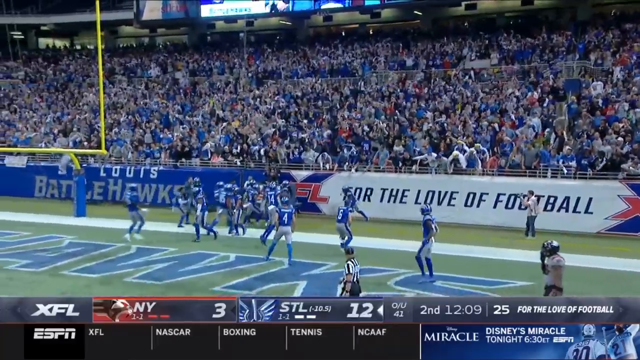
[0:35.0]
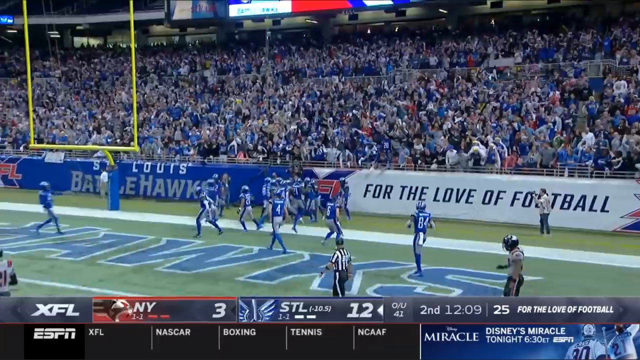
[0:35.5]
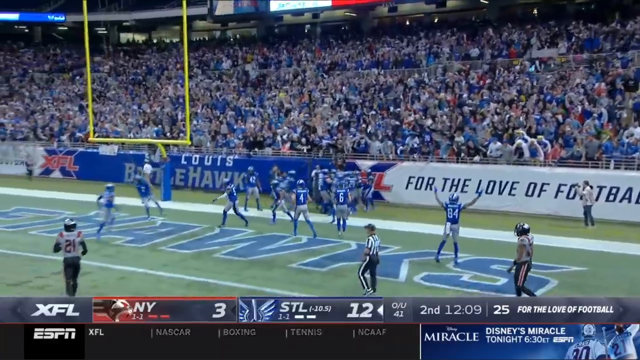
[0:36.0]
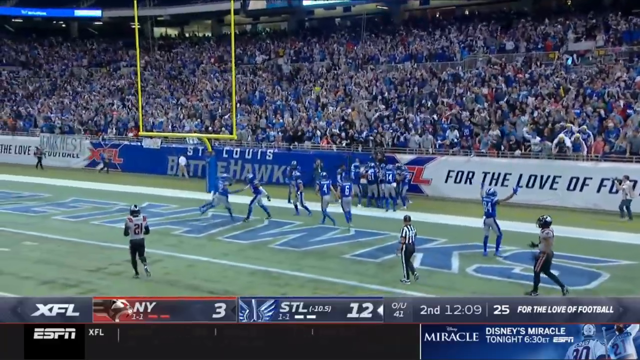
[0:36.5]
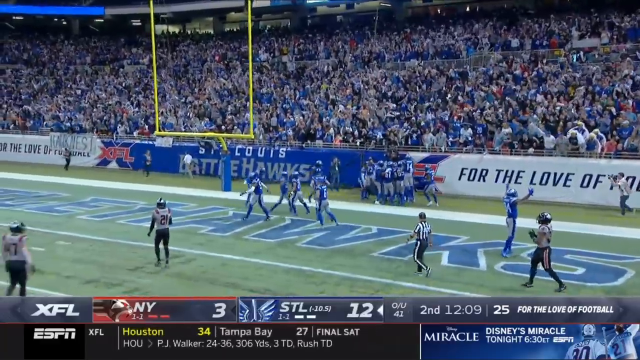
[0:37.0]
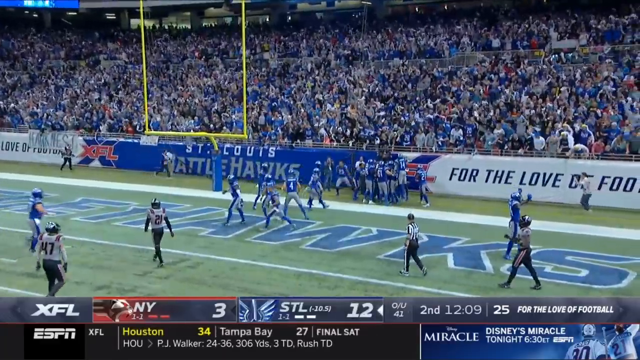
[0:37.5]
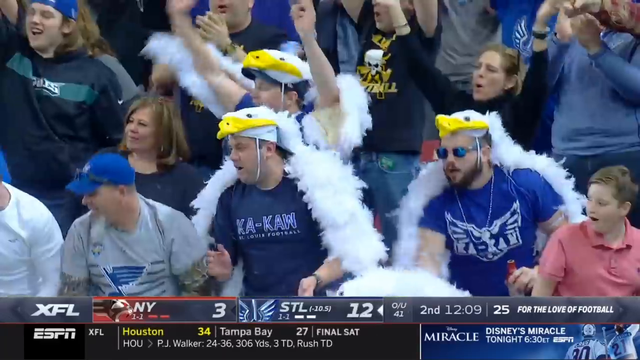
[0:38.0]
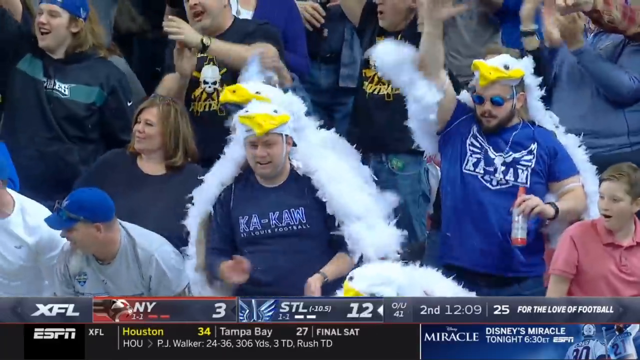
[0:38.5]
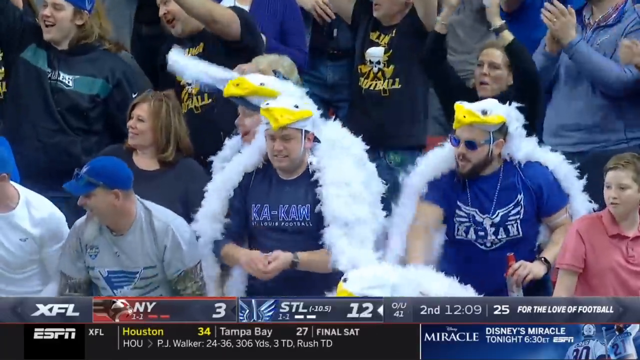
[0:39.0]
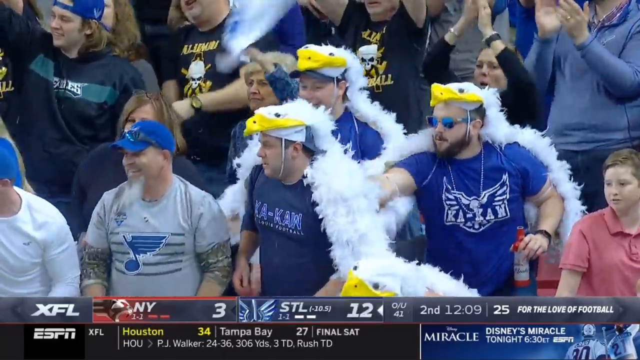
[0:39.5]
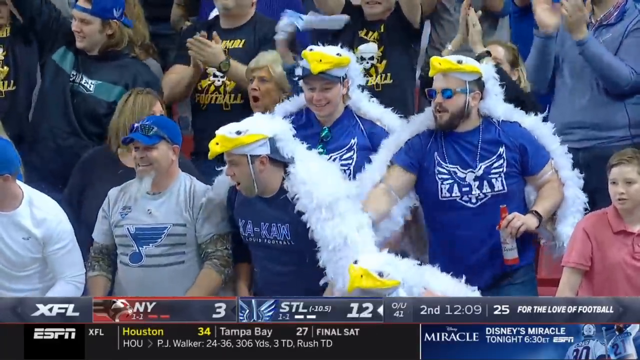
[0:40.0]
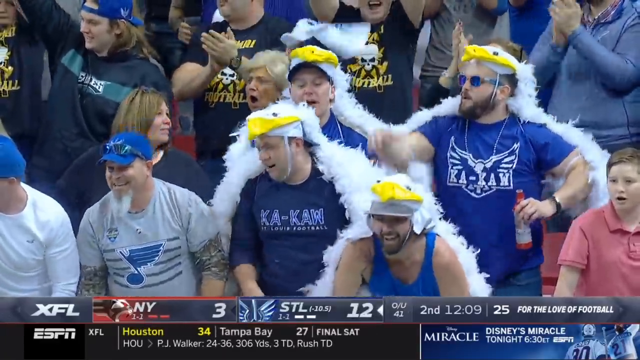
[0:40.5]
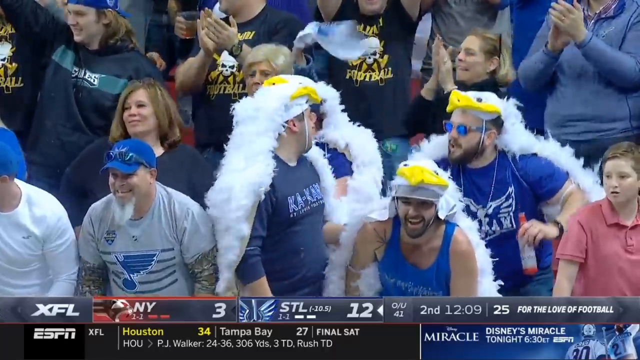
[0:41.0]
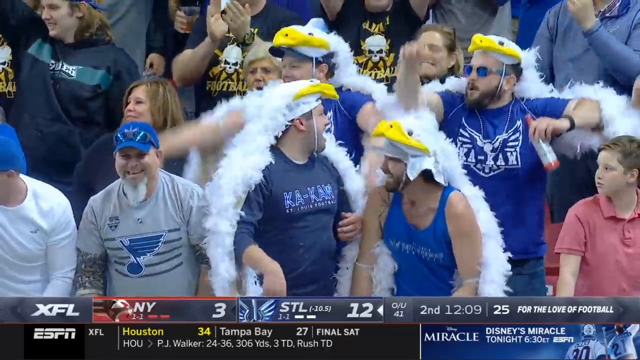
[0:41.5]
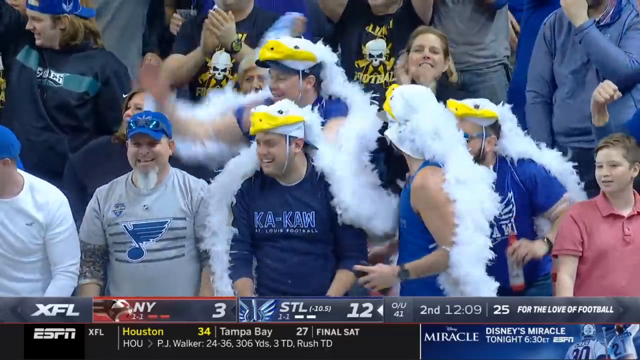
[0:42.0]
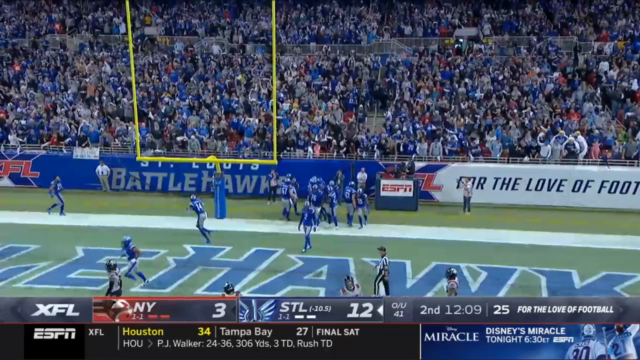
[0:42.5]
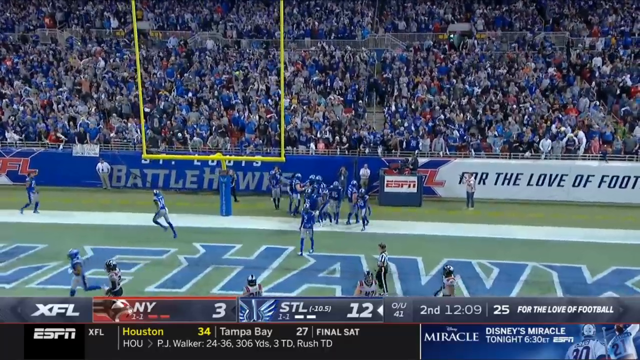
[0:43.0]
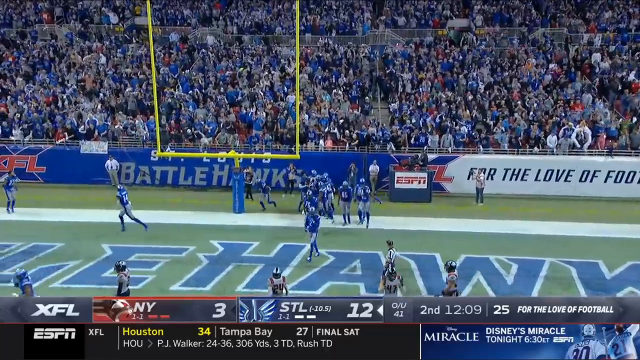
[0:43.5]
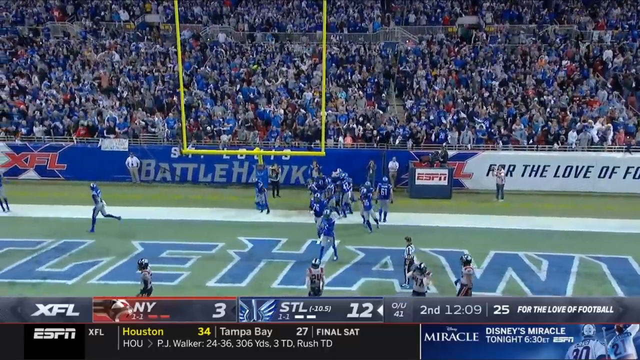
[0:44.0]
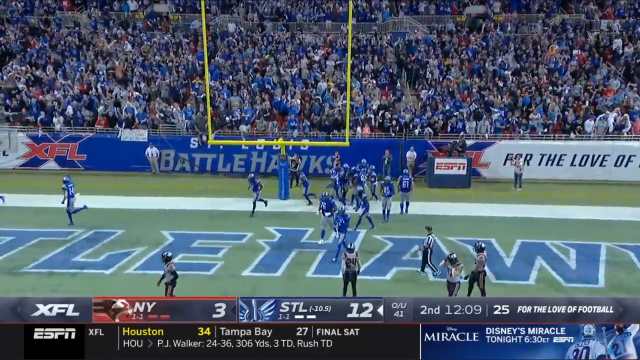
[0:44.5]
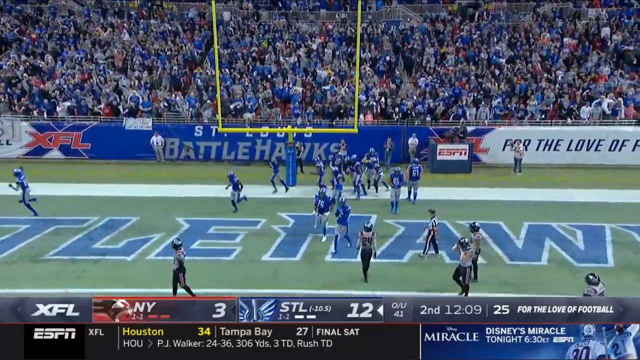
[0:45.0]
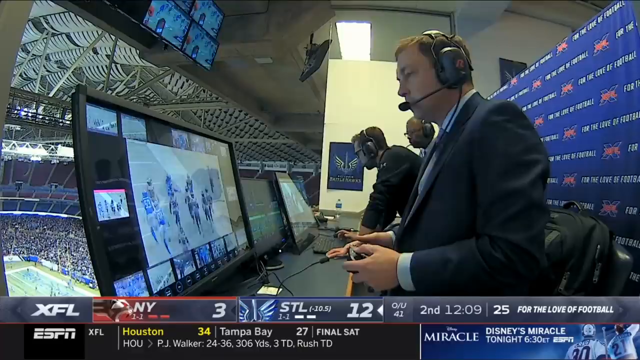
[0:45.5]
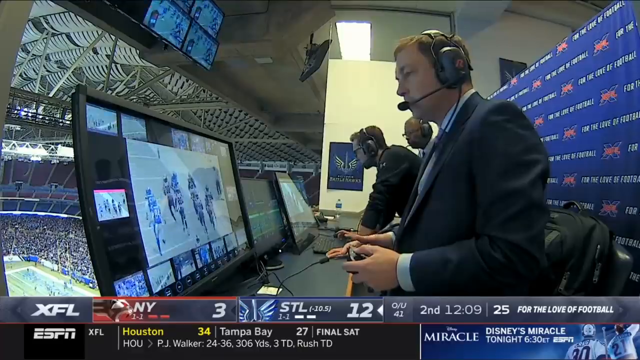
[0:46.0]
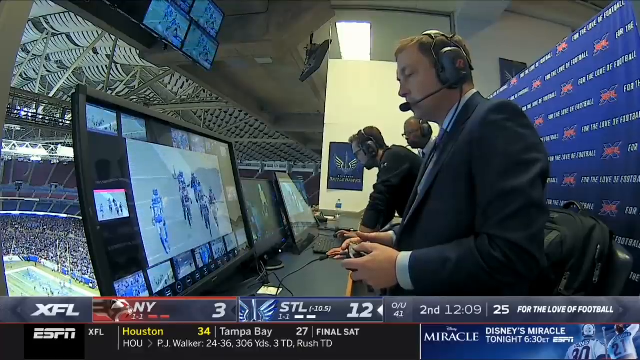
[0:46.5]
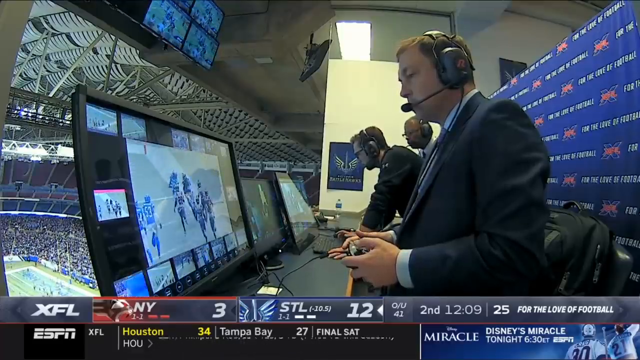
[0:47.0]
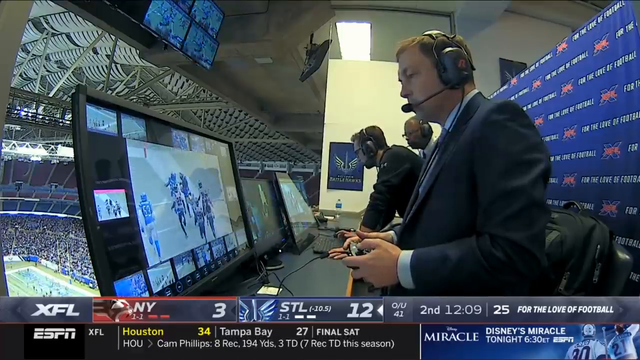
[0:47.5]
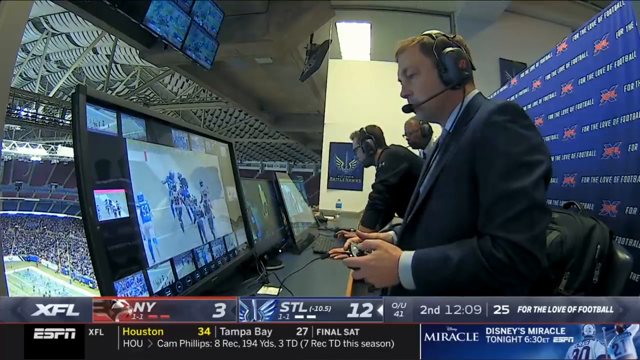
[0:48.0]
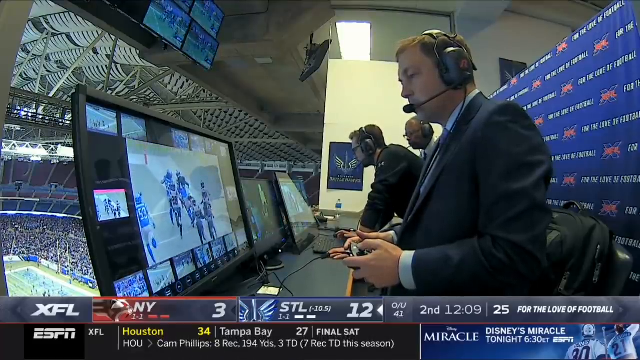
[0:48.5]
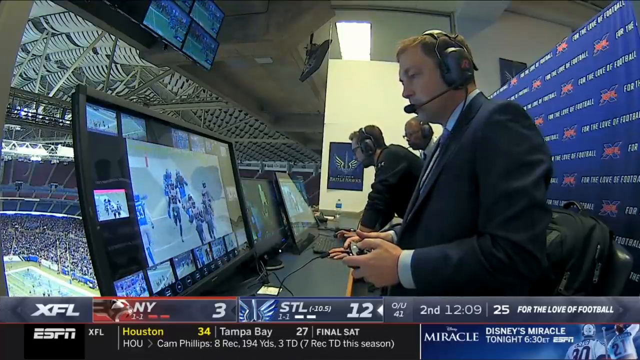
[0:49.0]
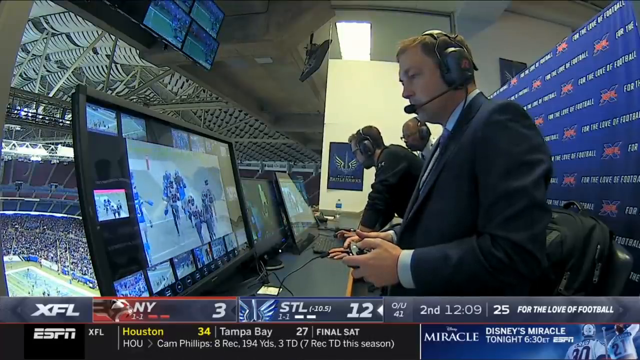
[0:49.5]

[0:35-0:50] A football game starts at the kickoff. One team, which looks like it is called the Battle Hawks, gets the ball; they catch it, and a player runs for a touchdown. One team wears black, white and red, and the other wears blue and white. He scores a touchdown for the Battle Hawks and everyone cheers. Fans dressed in Hawk outfits cheer and drink beer. The team cheers, and then a sportscaster is shown. The screen splits to show a referee in a white and black striped shirt with 81 on it, black pants and a white hat; he talks and points, walks backwards, points again and throws his right arm down. The team goes for an extra point and misses. A lady from ESPN interviews the player who scored the touchdown, who wears number 44. A replay of the touchdown follows and goes into slow motion, ending the video.